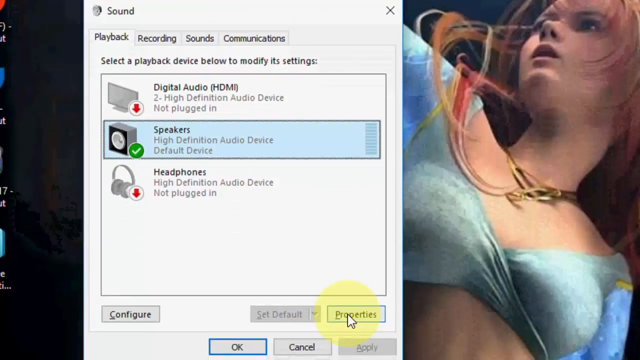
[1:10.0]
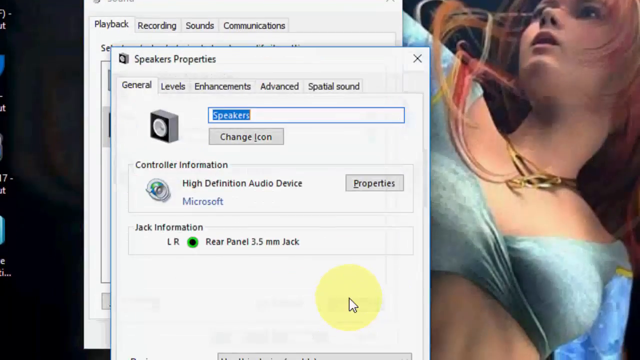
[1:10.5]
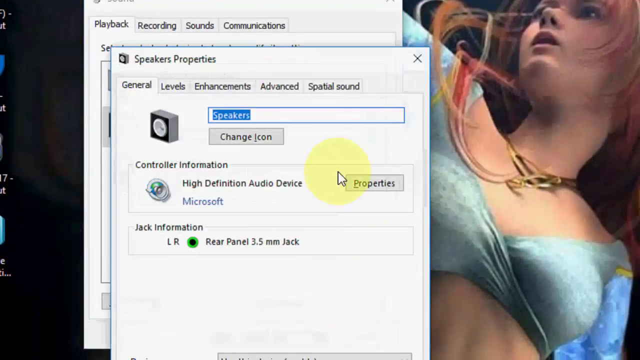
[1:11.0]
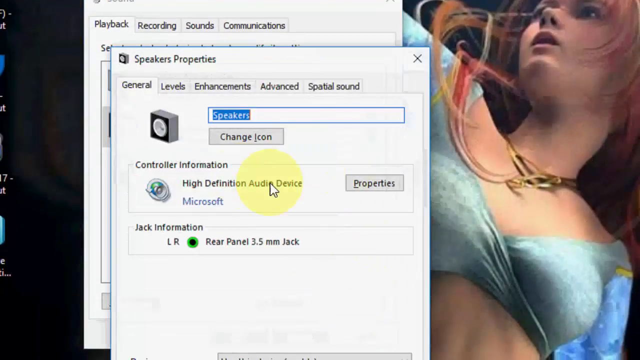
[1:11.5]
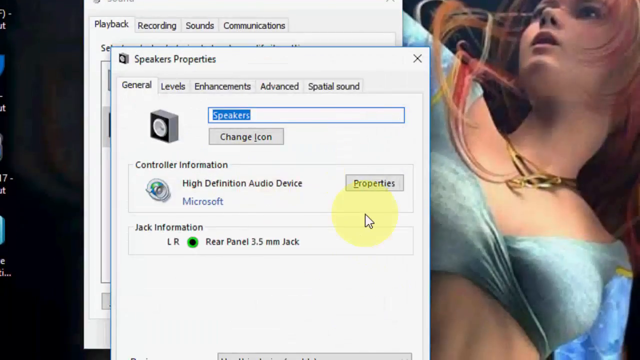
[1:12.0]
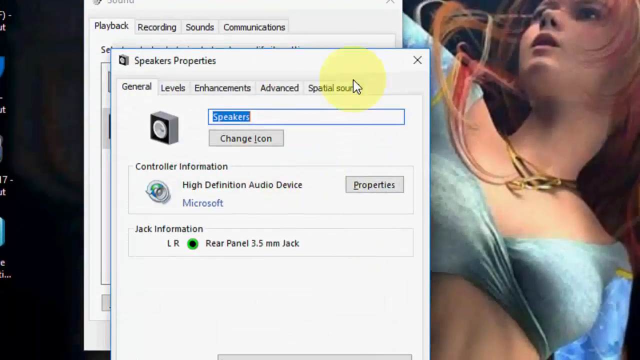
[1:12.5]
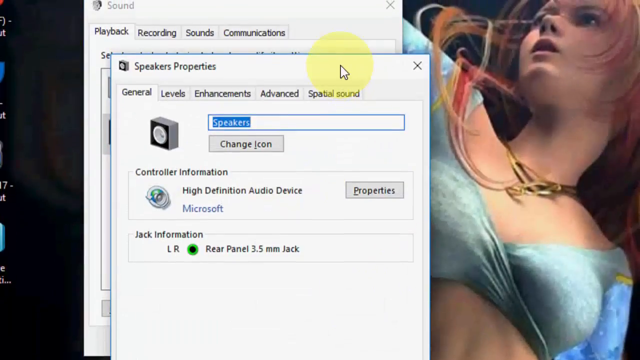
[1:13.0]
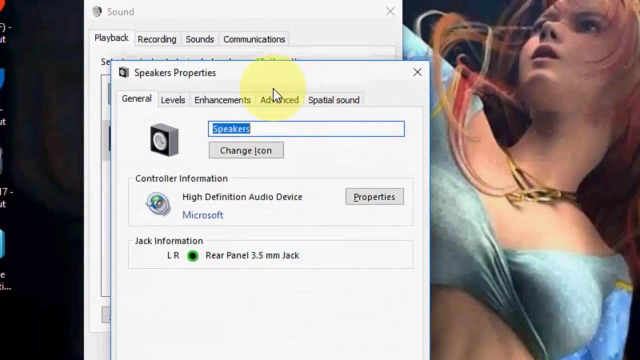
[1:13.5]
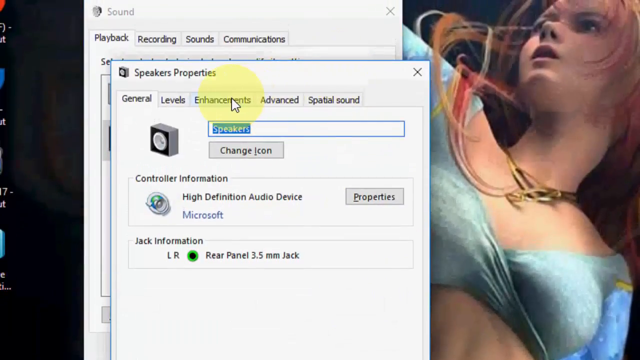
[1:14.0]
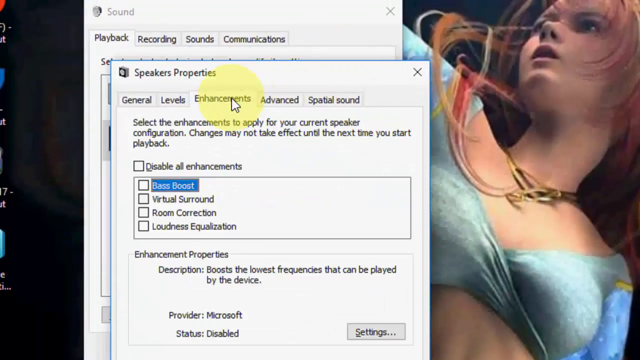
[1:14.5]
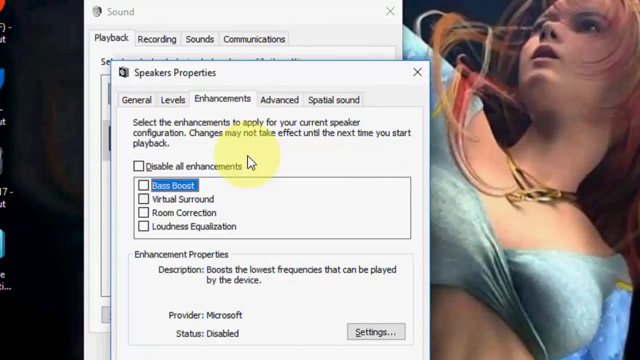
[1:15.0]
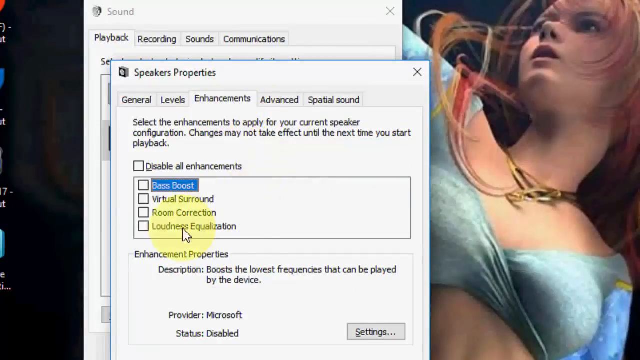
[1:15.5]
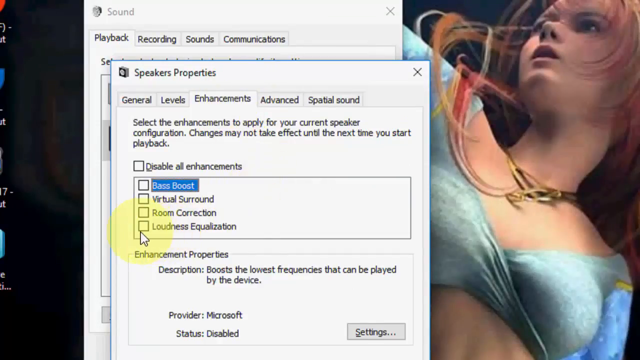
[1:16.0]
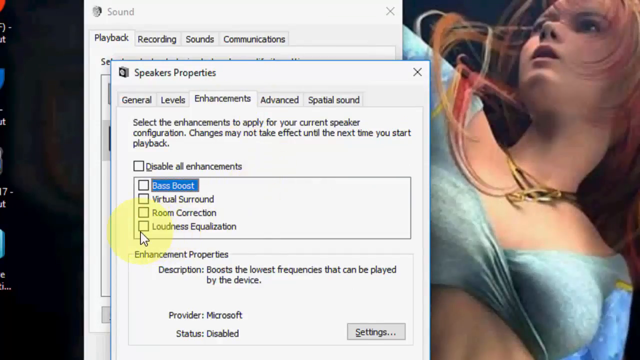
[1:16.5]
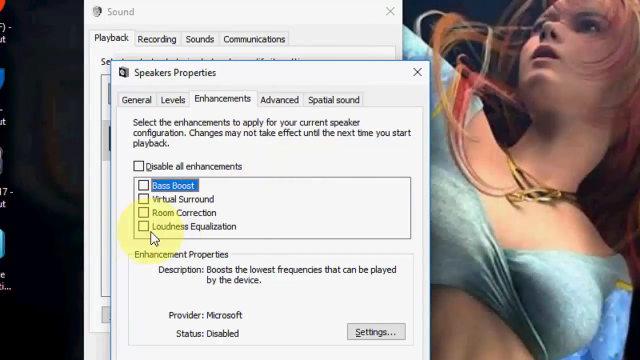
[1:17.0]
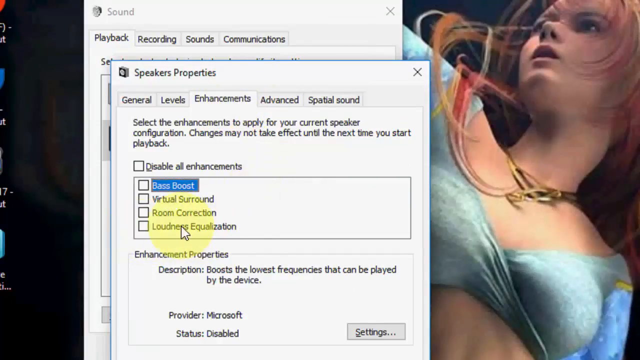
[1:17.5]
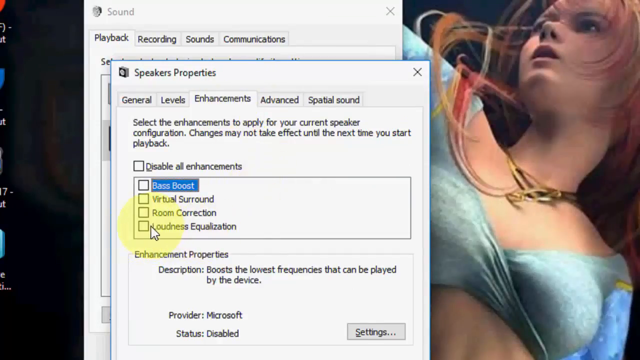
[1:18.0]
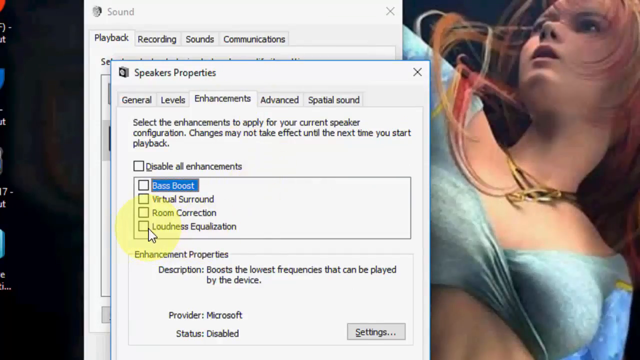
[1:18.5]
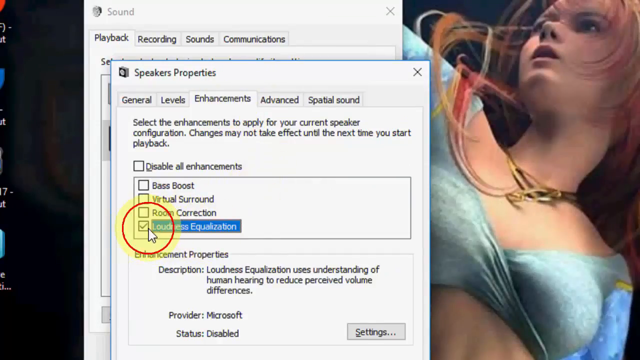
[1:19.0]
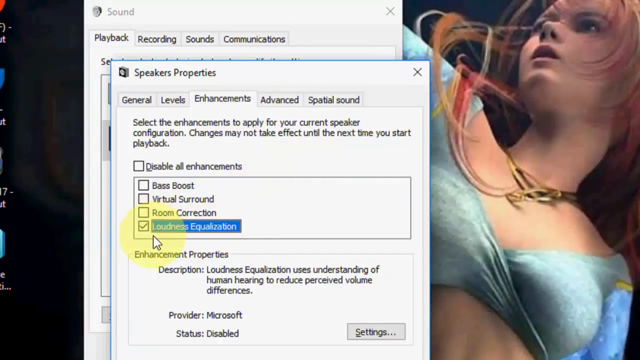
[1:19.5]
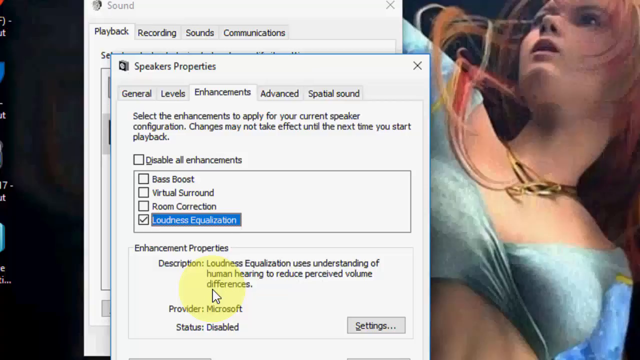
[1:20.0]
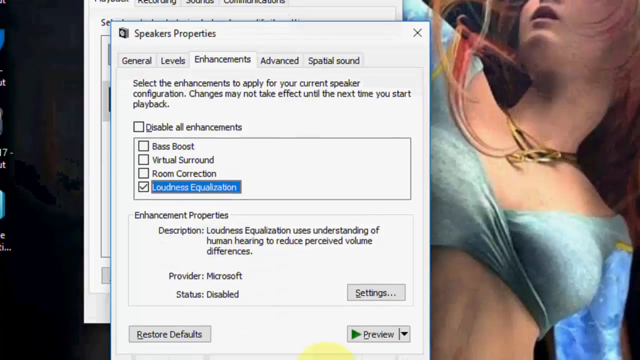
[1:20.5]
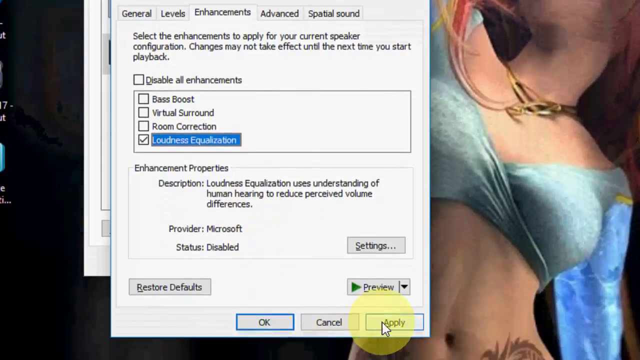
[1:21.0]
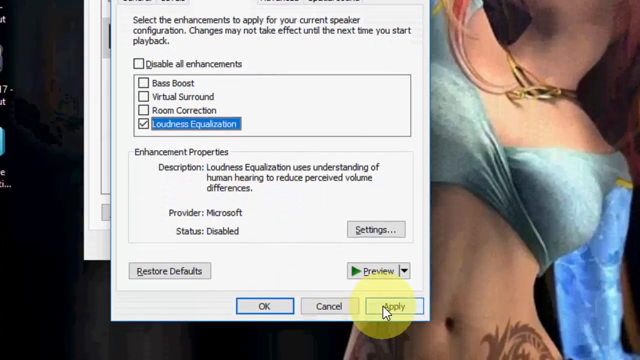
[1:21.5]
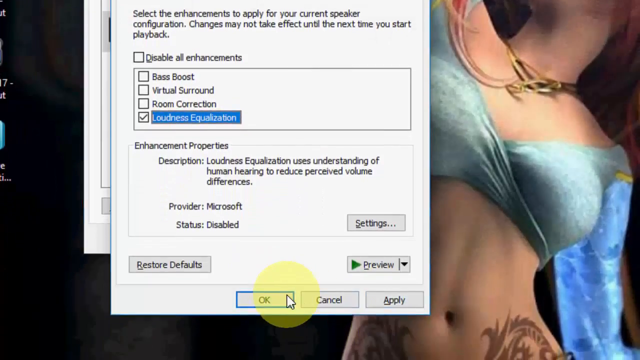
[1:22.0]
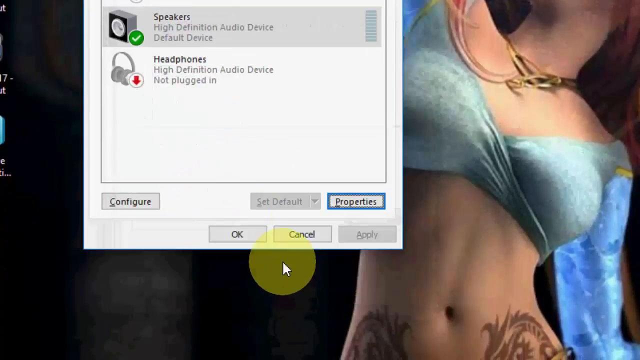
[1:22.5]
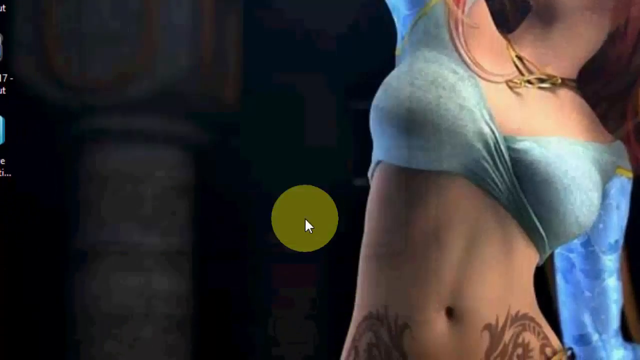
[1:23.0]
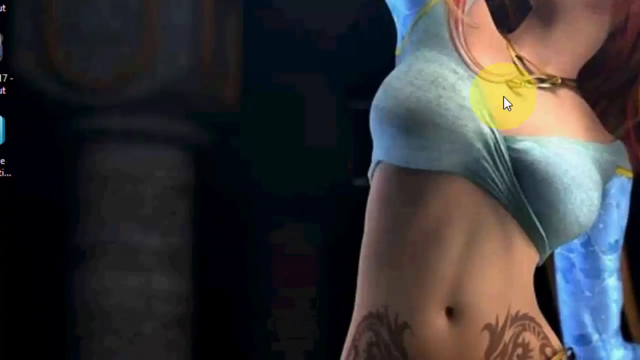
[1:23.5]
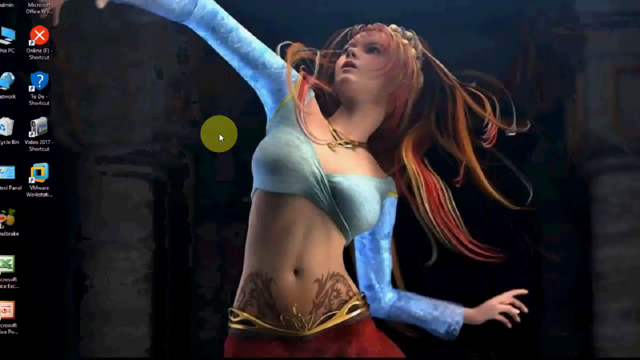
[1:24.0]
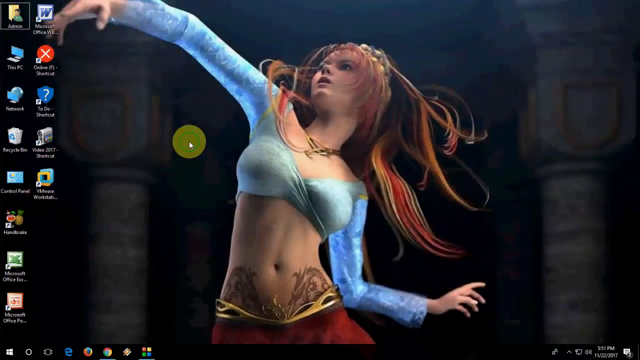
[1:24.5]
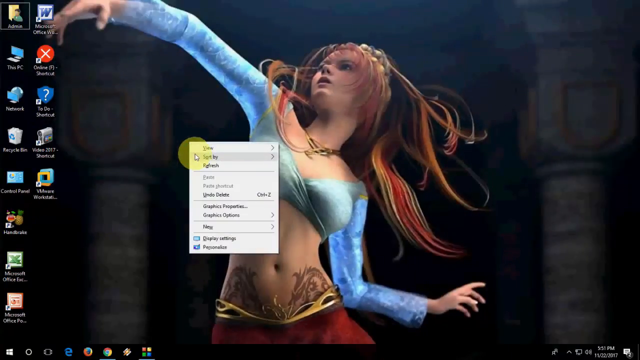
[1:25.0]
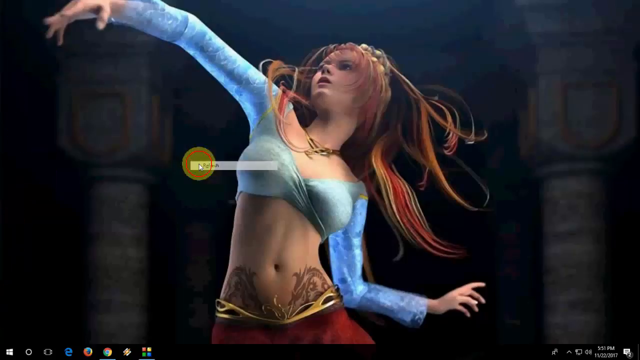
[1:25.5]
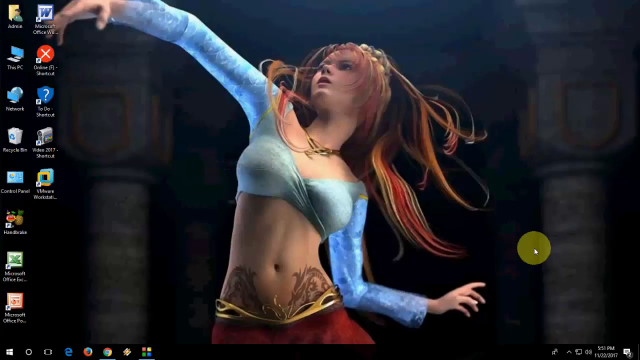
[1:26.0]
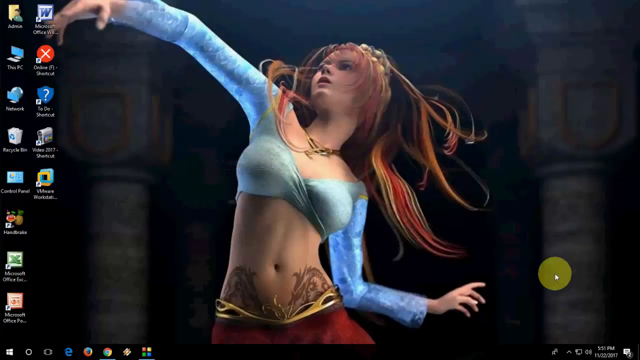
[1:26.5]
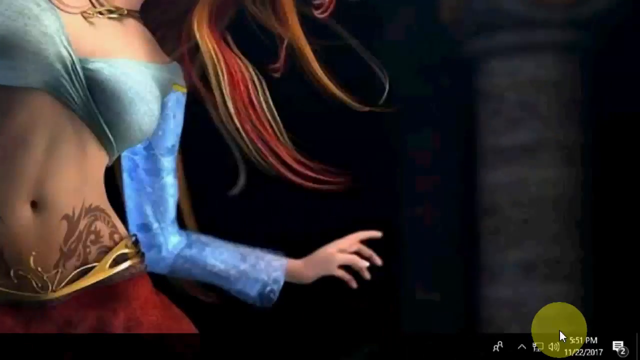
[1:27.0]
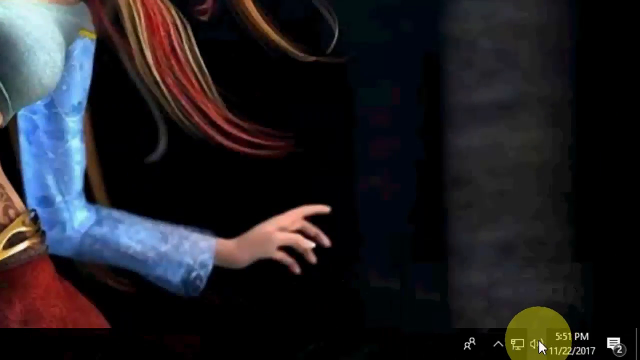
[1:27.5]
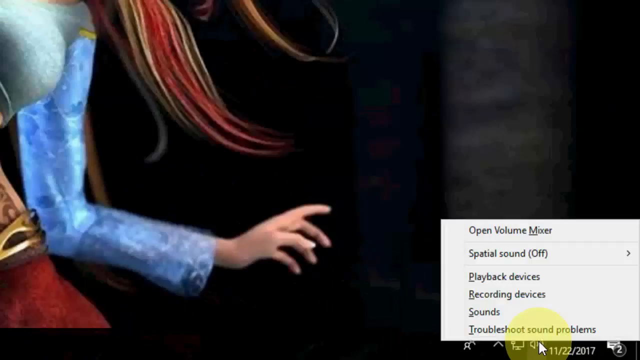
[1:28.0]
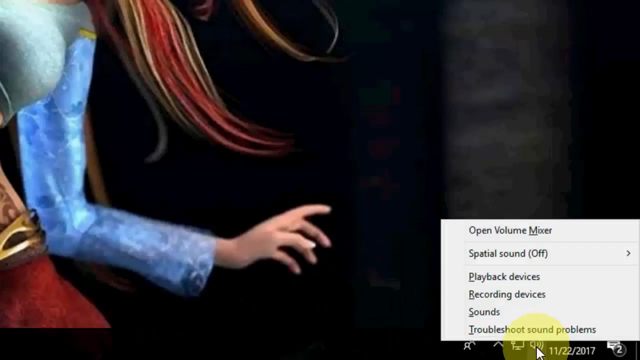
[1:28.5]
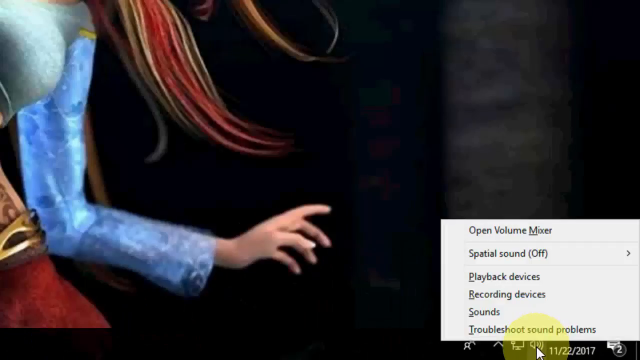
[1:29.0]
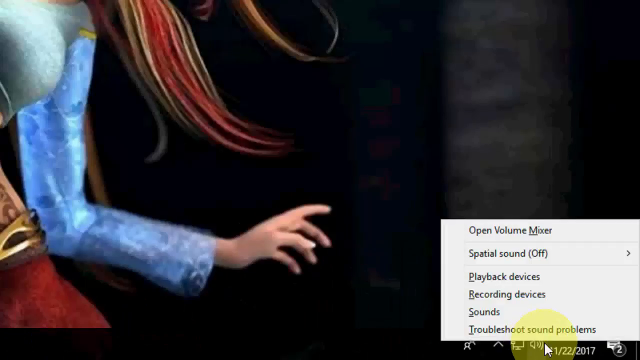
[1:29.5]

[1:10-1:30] A screen of a computer is shown, its wallpaper an animated redheaded woman dancing, wearing a gold choker necklace and a skimpy green and blue top. Over her is an open window for adjusting the computer's sound settings, very zoomed in so the settings are clearly visible. It starts in the playback menu on the speakers setting; the person hits the apply button at the bottom, goes up to speaker properties, and changes through them, going to the loudness and equalizer settings and applying them to the speakers. They then zoom out, go back down to the bottom, open the speaker controls again, and go back to sound properties one more time.